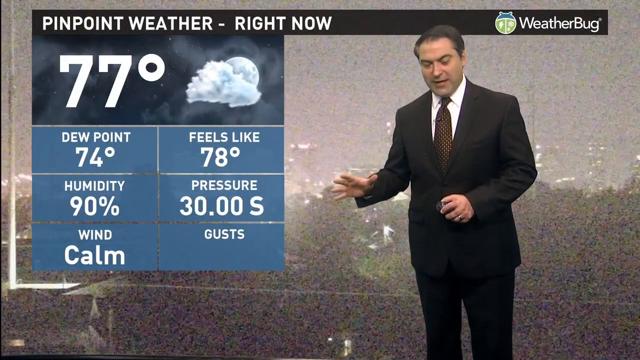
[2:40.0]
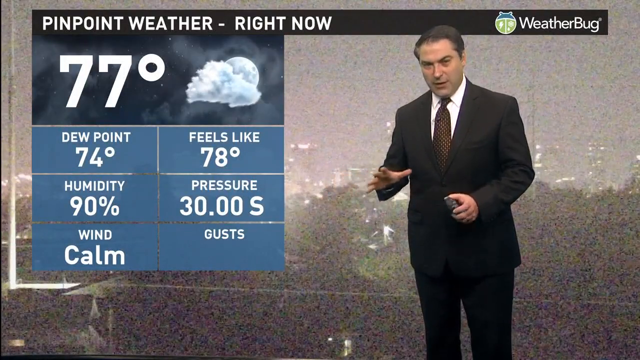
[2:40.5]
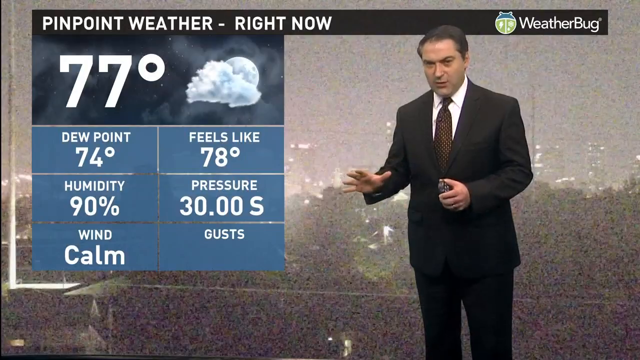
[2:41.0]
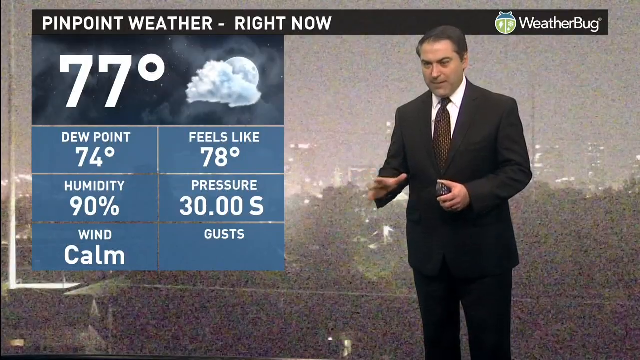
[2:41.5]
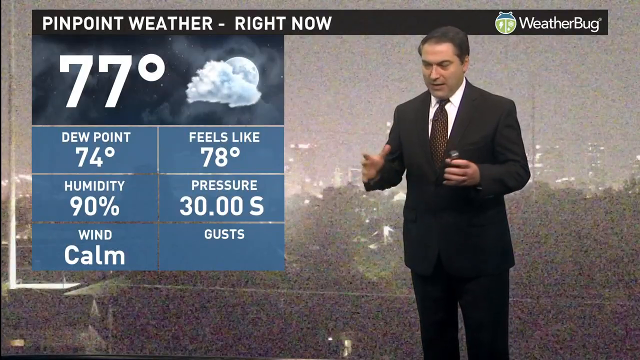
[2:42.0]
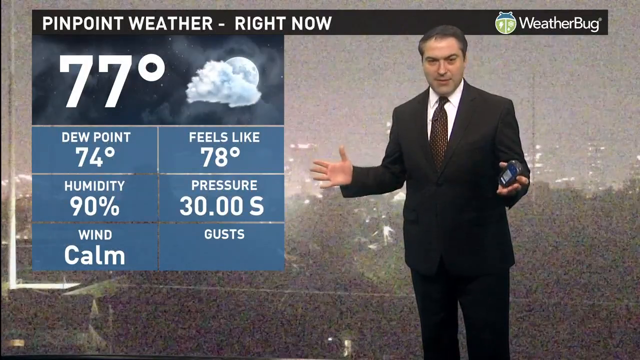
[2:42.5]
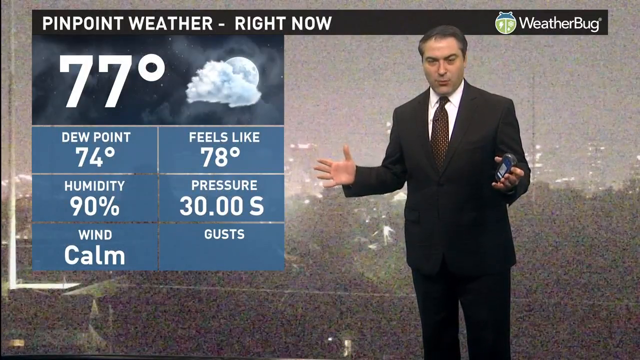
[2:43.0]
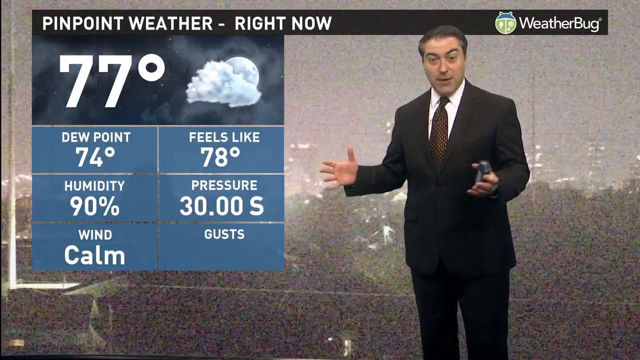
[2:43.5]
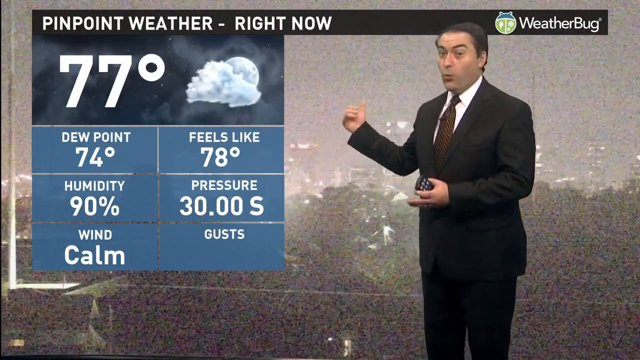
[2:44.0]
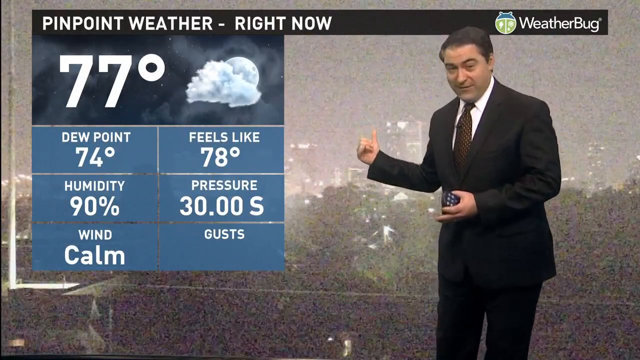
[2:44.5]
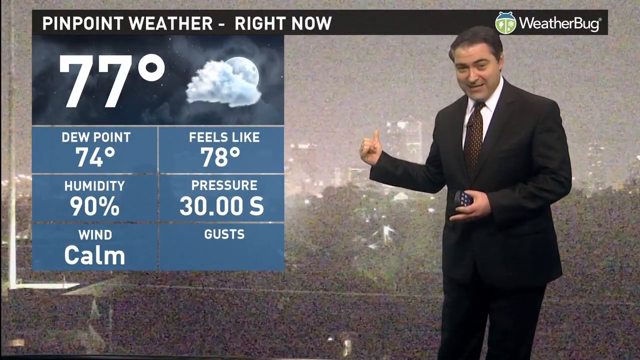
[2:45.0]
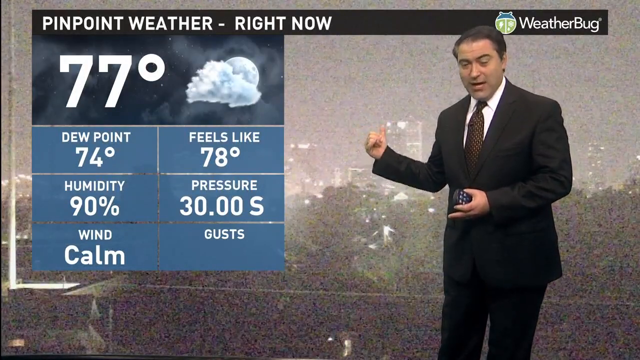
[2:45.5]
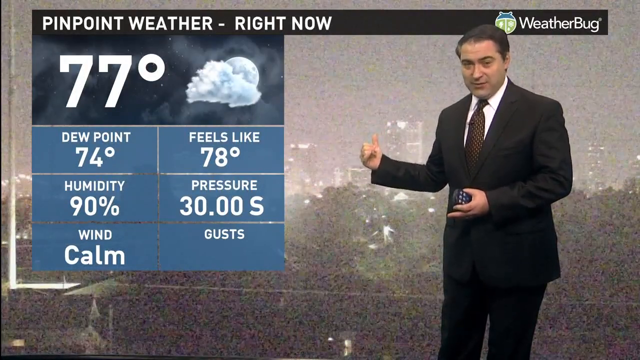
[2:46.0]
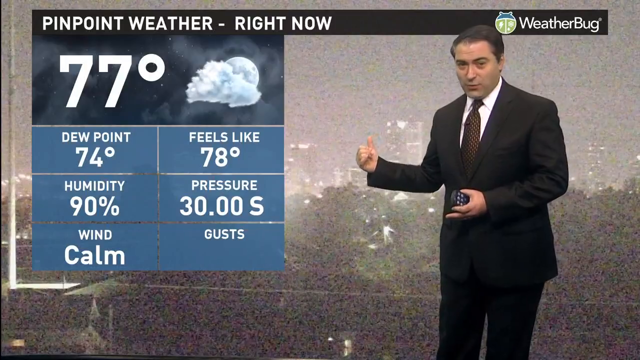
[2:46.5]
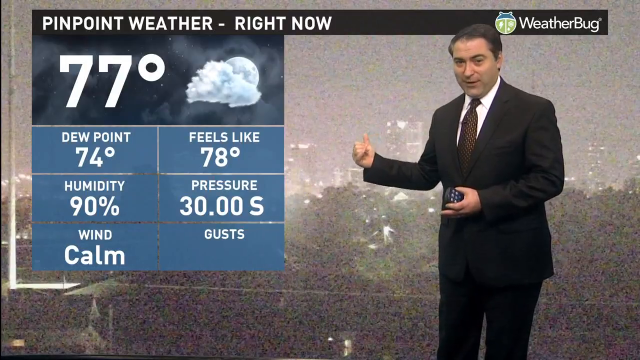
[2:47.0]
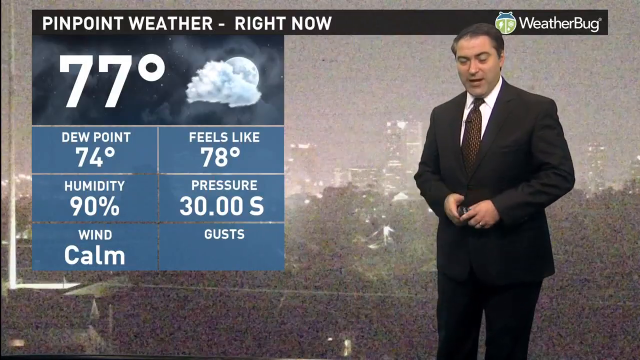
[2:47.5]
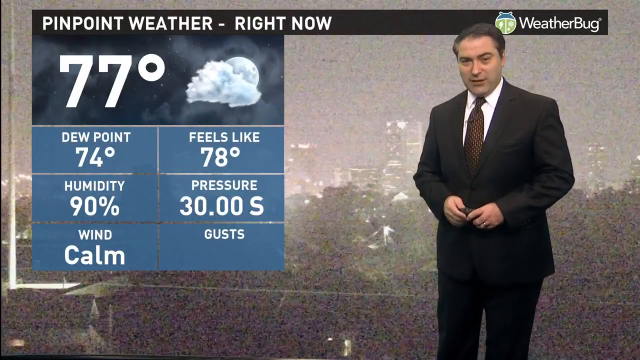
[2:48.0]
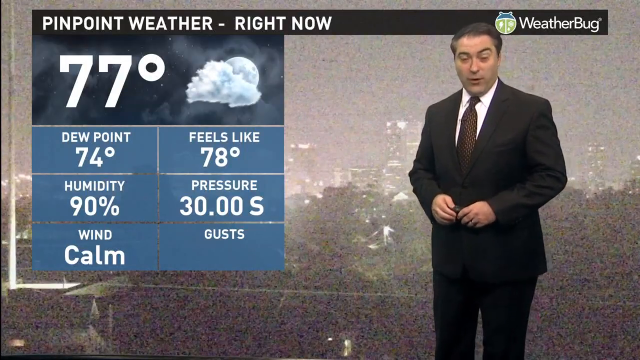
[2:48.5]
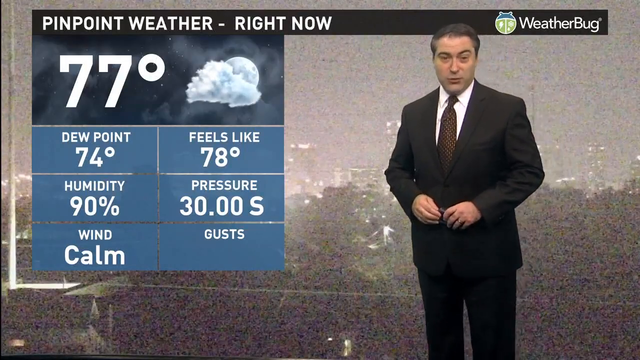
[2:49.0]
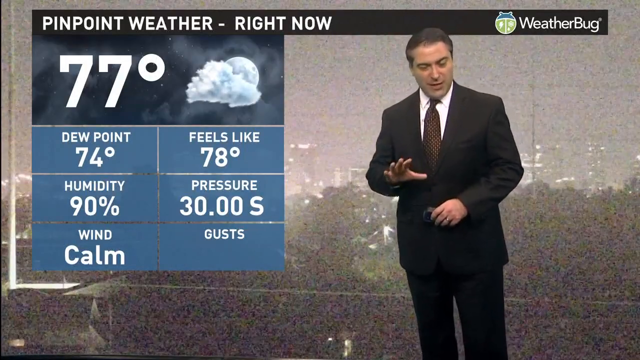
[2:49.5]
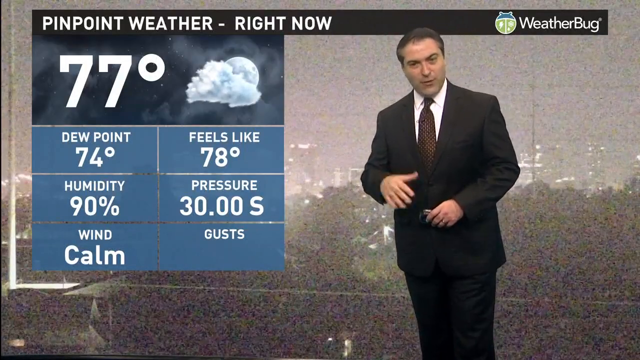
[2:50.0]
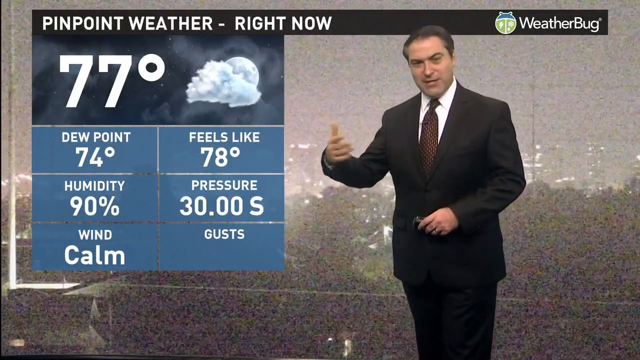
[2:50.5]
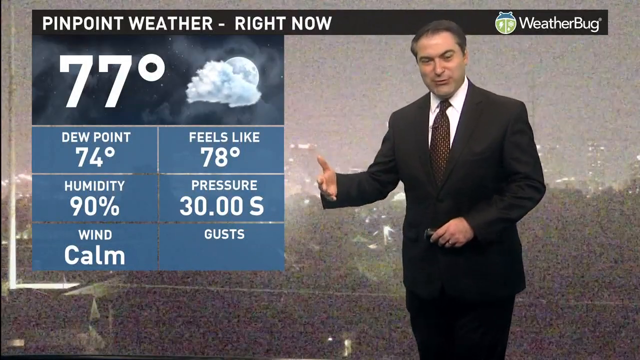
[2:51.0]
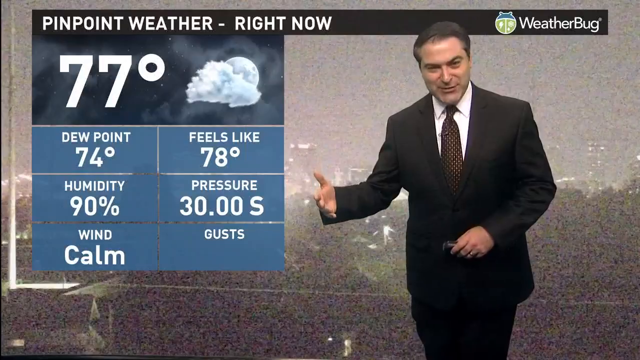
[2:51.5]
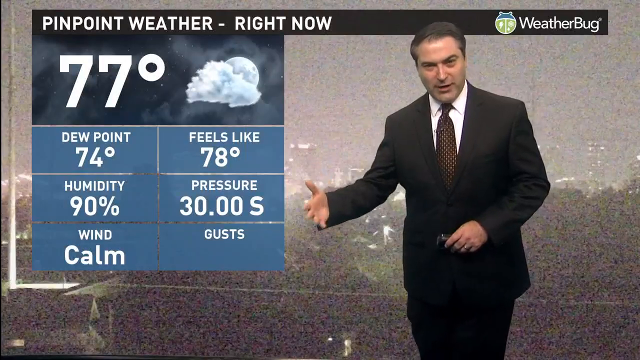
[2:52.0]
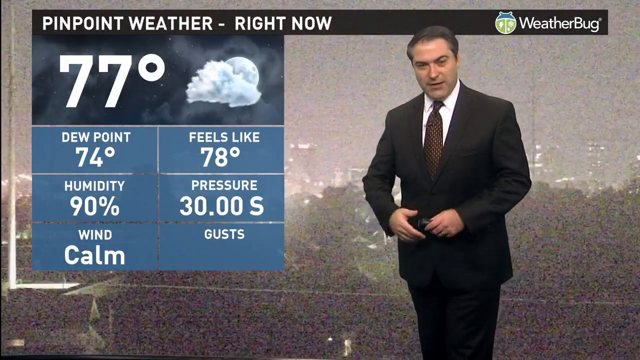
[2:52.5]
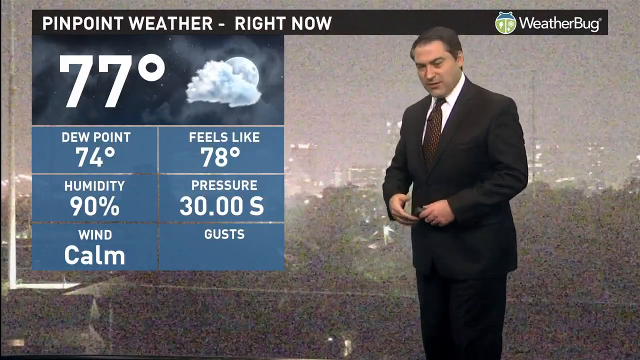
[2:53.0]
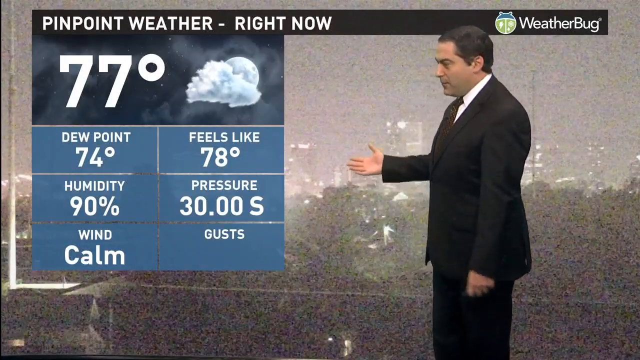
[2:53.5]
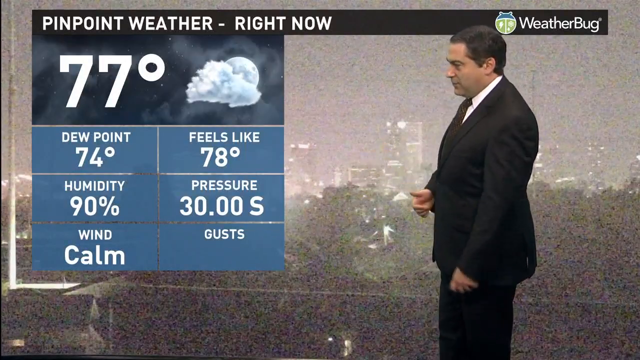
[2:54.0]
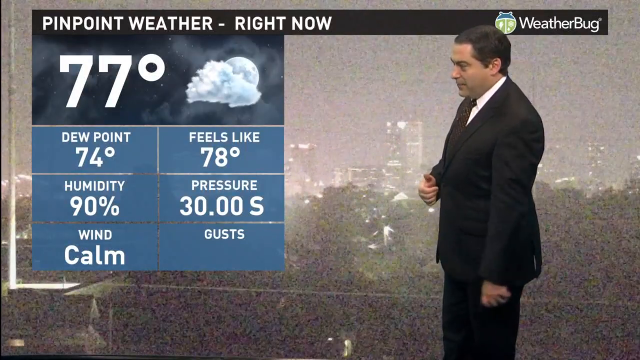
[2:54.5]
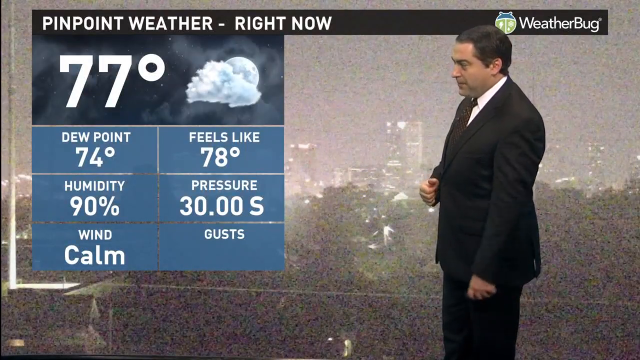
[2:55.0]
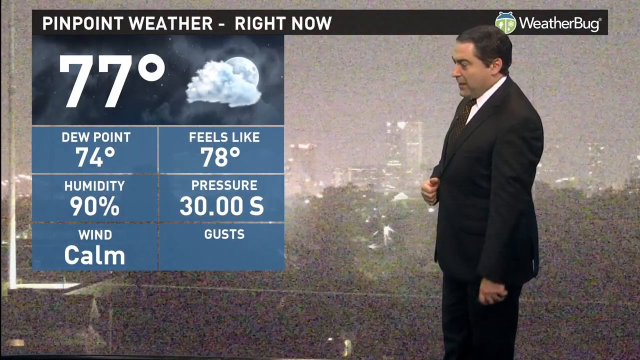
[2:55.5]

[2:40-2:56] The weatherman, wearing a black suit, burgundy tie and white shirt, stands in front of the weather screen. Behind him appears to be an evening tropical scene that does not indicate the location. A big weather box on the left side of the screen says it is 77 degrees and gives the dew point, feels like 70 degrees, humidity, pressure and calm winds. He puts his hands together and opens them, holding the weather clicker in his left hand with his right palm open as he gestures. He points to the evening scene behind him, which looks like a city of some sort, and his face looks calm. He has very bushy eyebrows. He circles his right hand to gesture, sort of leans towards the screen a little, backs off and puts his hands together. He then turns his right side towards the screen and starts talking about the box. The view then goes back to the circular hurricane moving across the Caribbean, and the weatherman continues gesturing with his right hand.